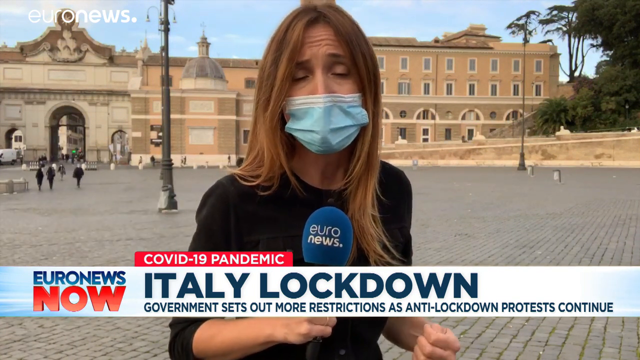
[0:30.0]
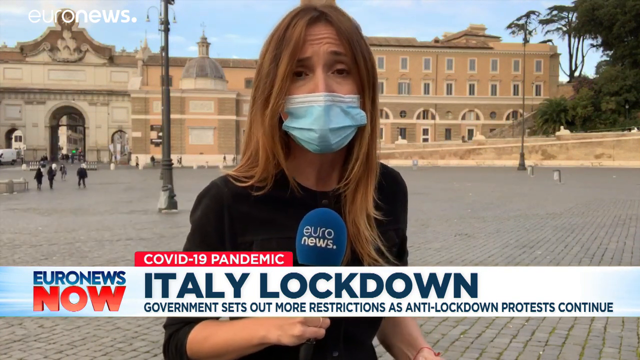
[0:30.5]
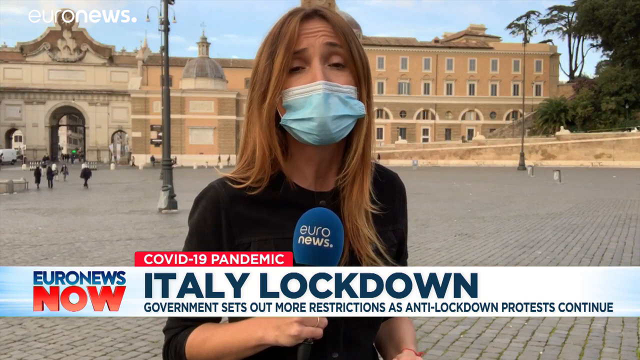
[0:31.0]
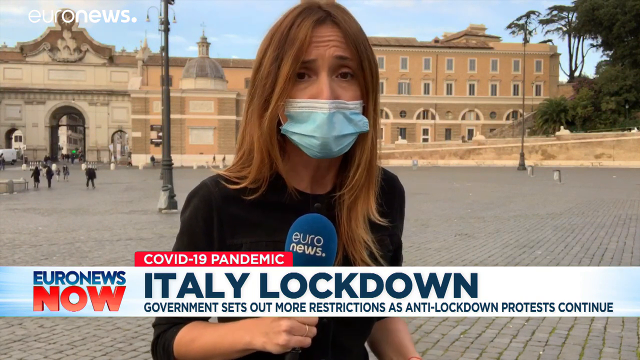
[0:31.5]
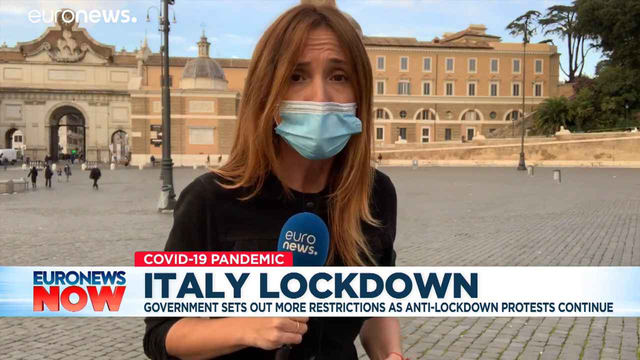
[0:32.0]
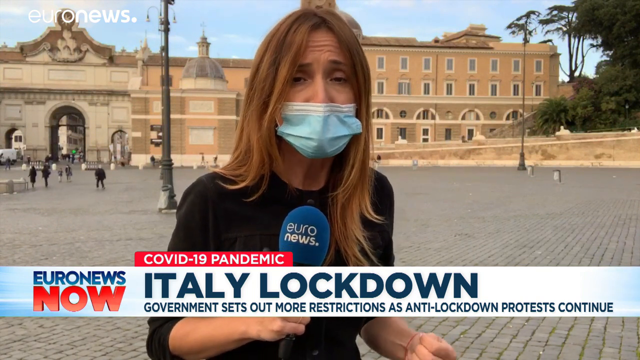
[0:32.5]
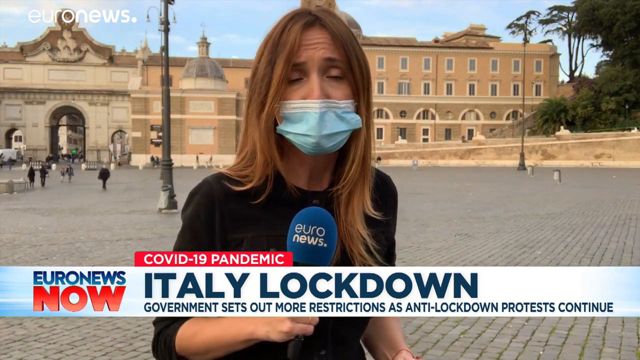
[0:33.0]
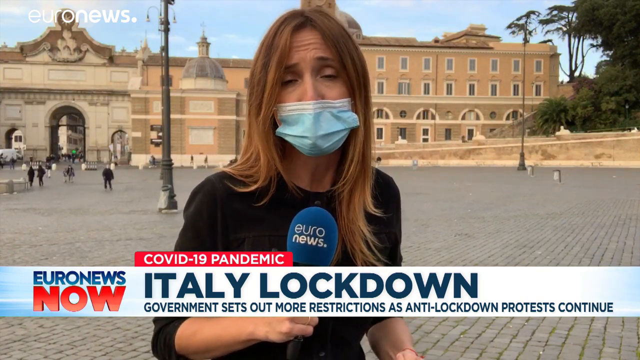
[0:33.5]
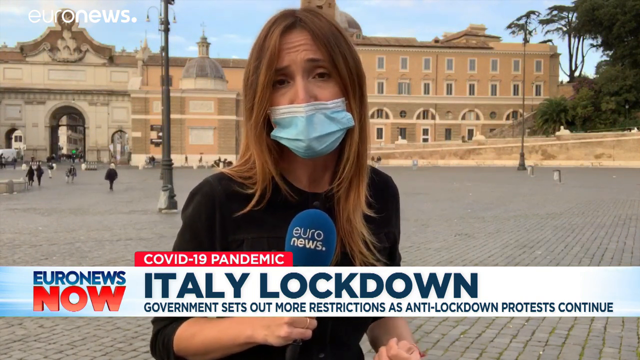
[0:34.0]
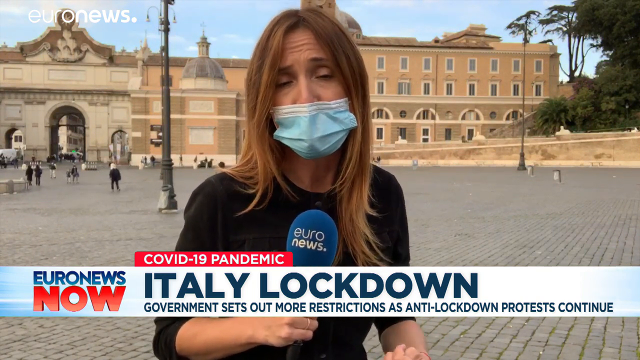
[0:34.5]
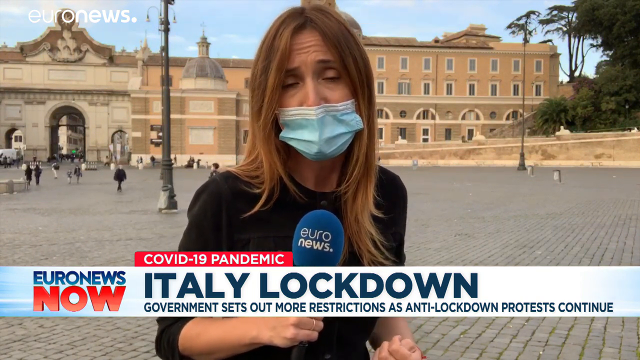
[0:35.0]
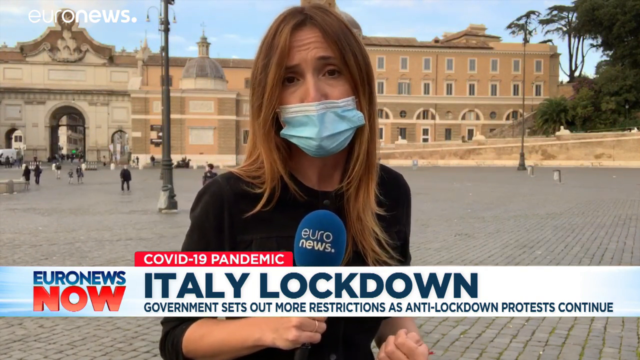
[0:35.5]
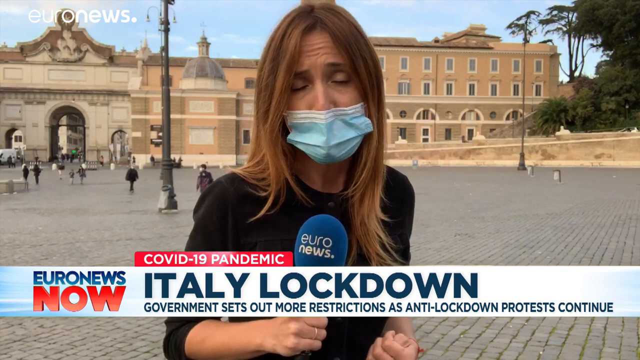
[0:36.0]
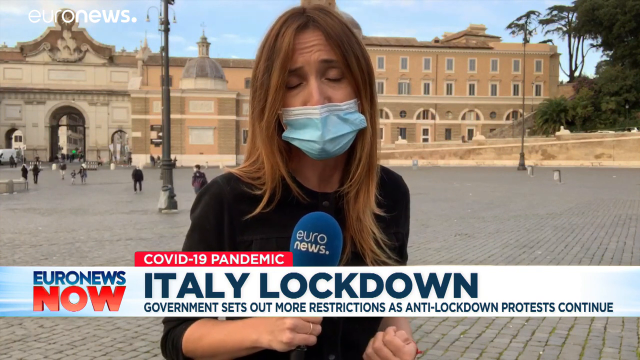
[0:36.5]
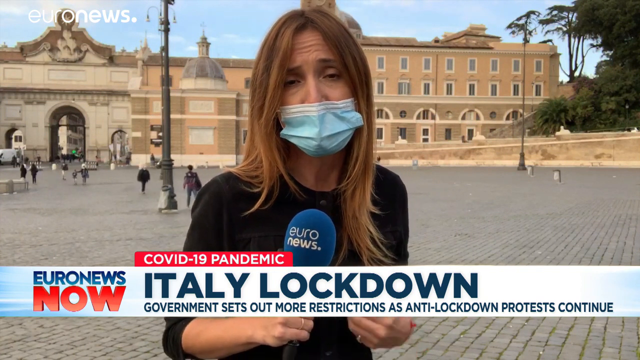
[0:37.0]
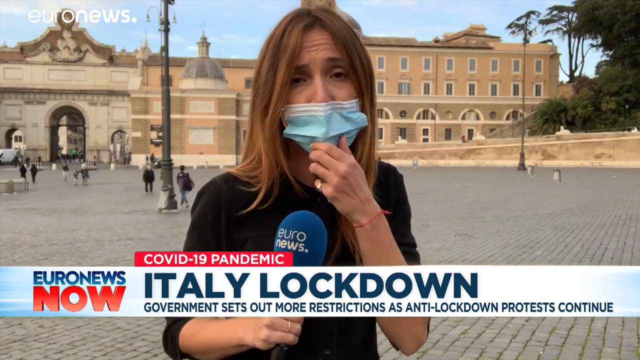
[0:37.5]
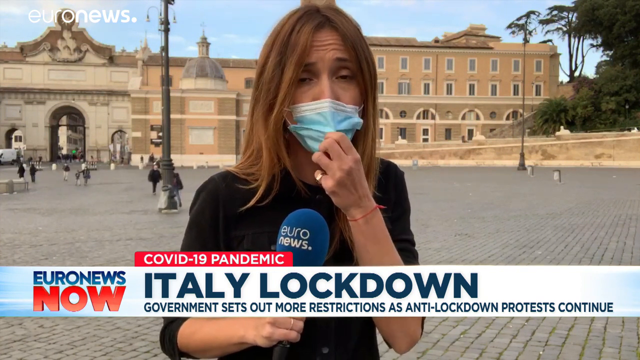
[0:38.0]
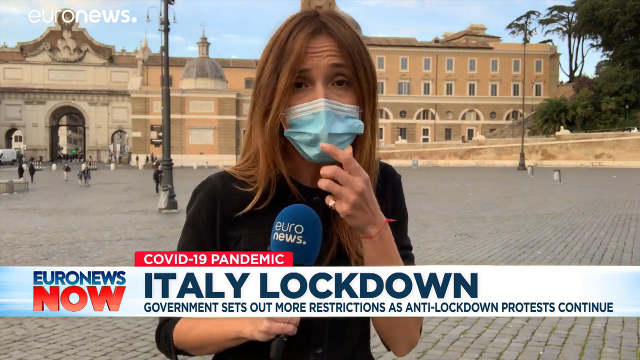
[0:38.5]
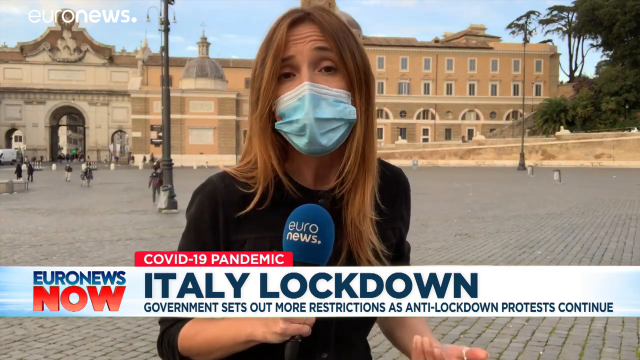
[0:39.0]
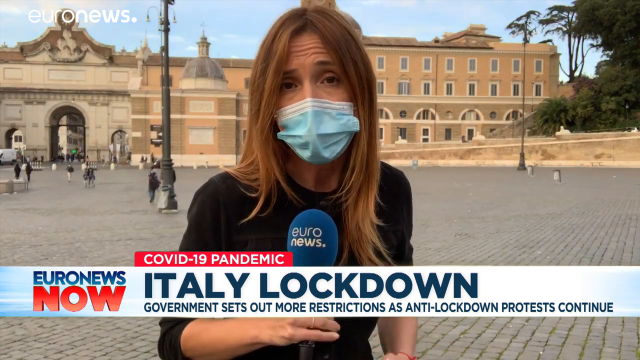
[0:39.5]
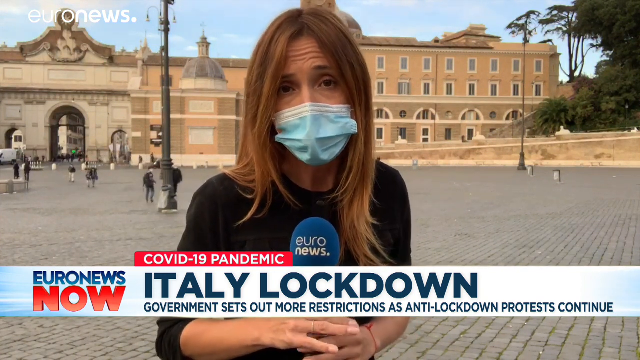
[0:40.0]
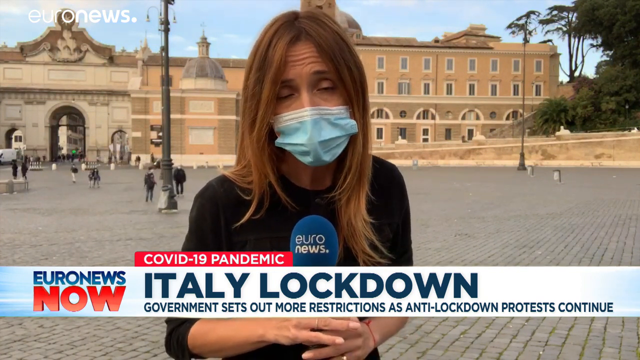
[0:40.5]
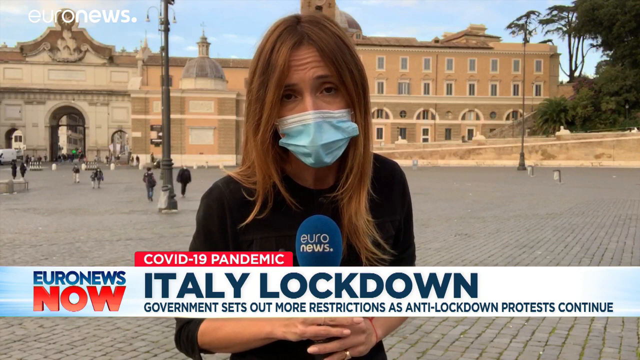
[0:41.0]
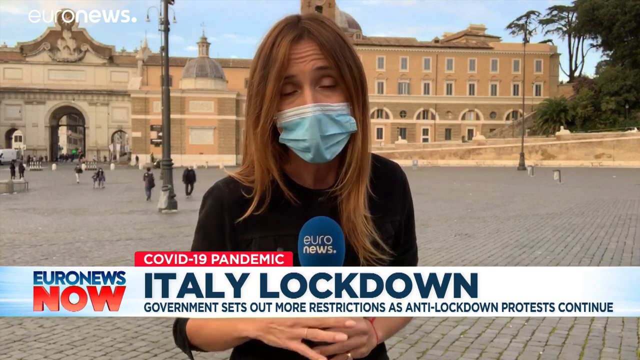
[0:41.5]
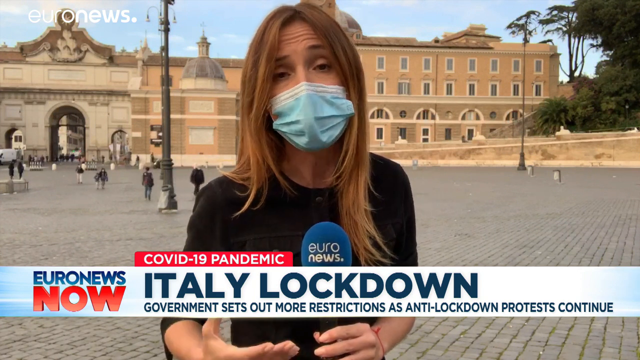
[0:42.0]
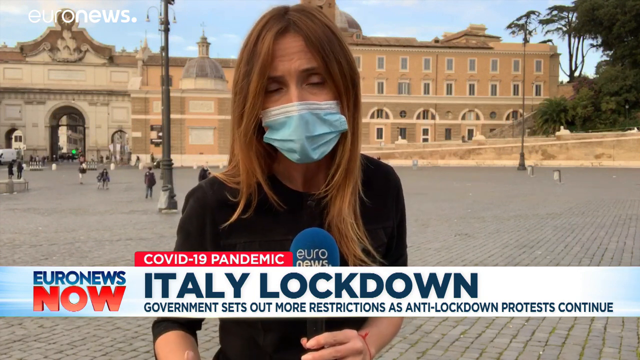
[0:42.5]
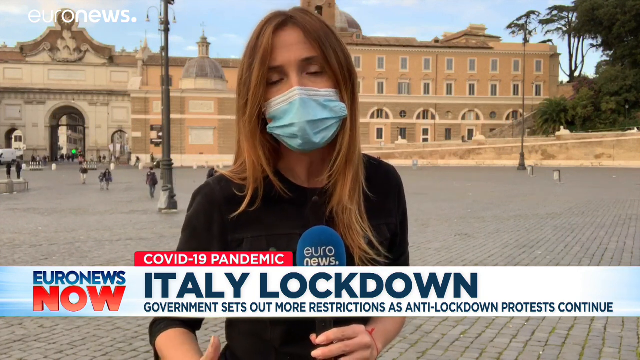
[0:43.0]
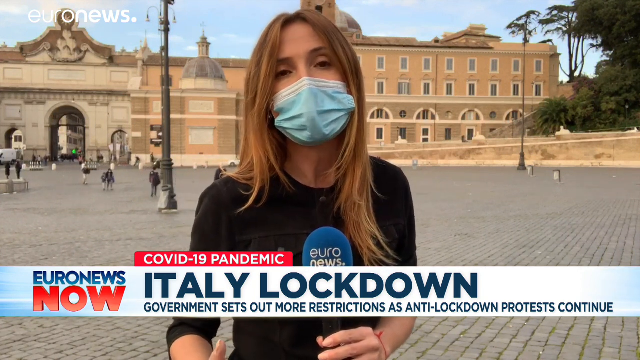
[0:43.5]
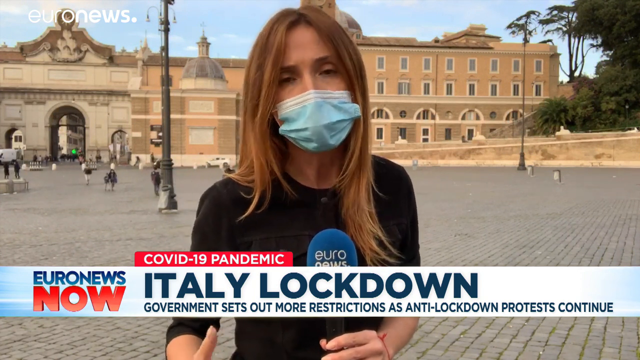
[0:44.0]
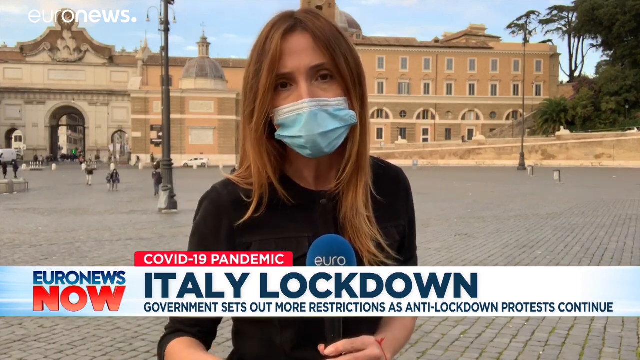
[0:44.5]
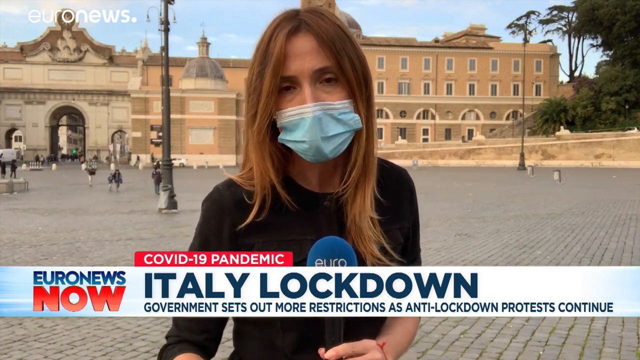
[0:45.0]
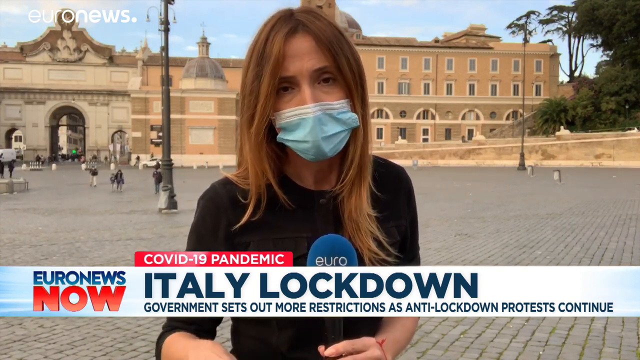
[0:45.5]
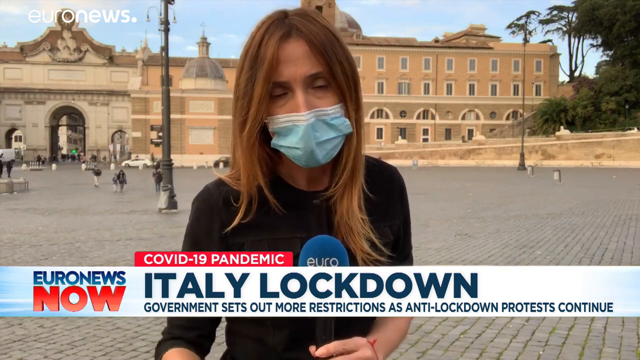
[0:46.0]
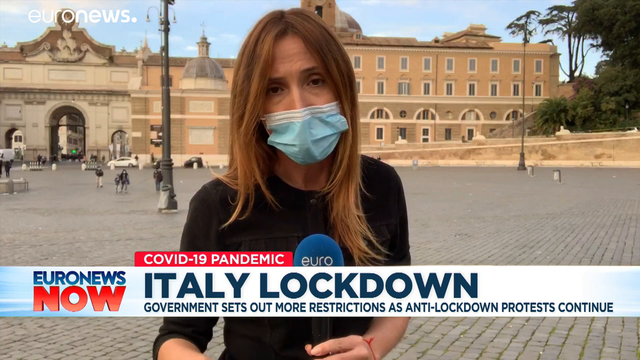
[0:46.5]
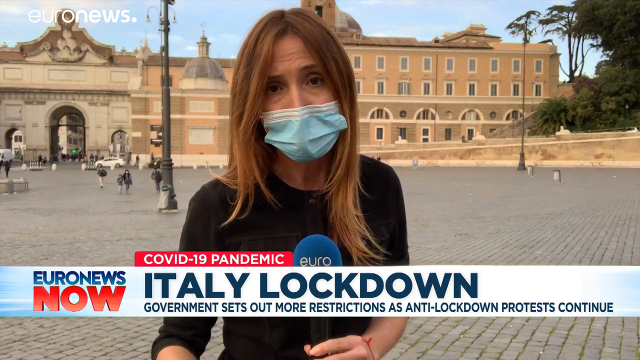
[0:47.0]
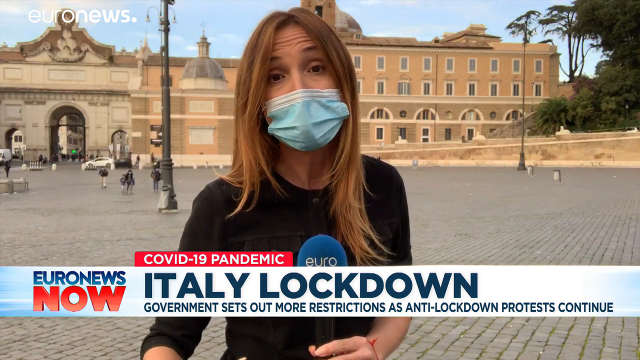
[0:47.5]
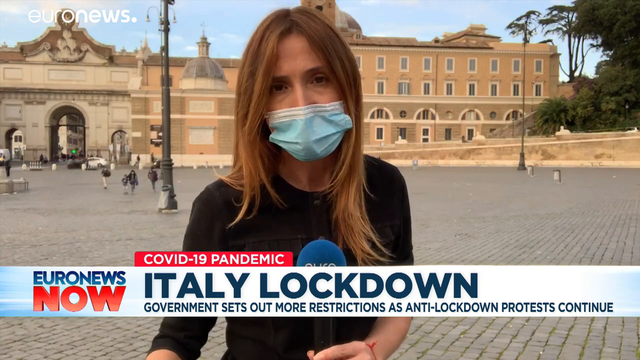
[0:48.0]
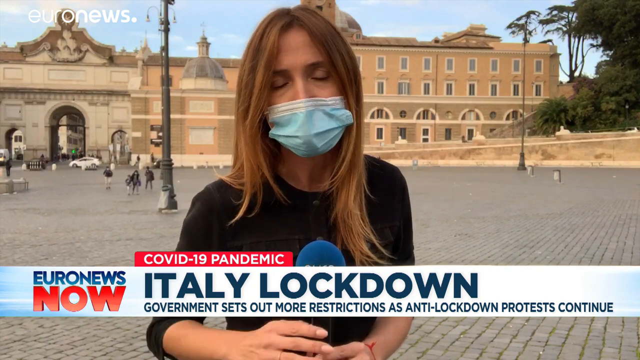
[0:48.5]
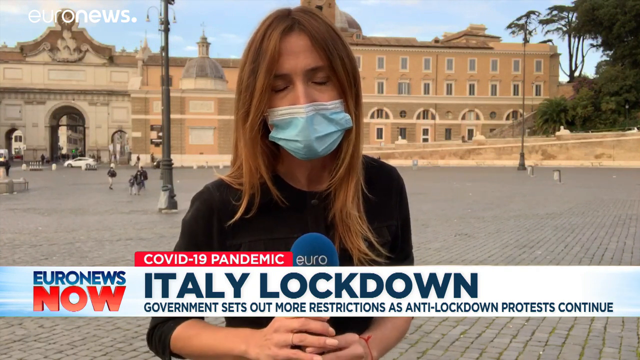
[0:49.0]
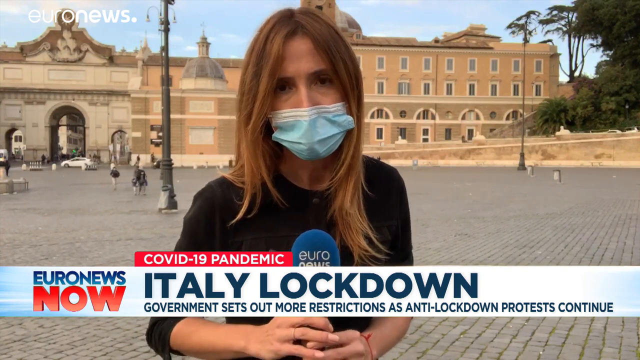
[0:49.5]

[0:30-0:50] A woman with blonde, brownish hair extending past her shoulder wears a blue and white mask and a long black dress shirt, and holds a blue microphone that says "Euronews". White text in the top left corner says "Euronews". At the bottom is a very long banner with blue and orange text that says "Euronews now" and blue text that says "Italy lockdown. Government sets out more restrictions as anti-lockdown protests continue." Above it is an orange banner with white text that says "COVID-19 pandemic". The woman talks into the microphone with her mask on, and the mask moves each time she talks. In the background a bunch of people are walking, and the setting appears to be Rome. There is a light pole behind her and another one on her right side, and a bunch of green trees in the upper right corner.